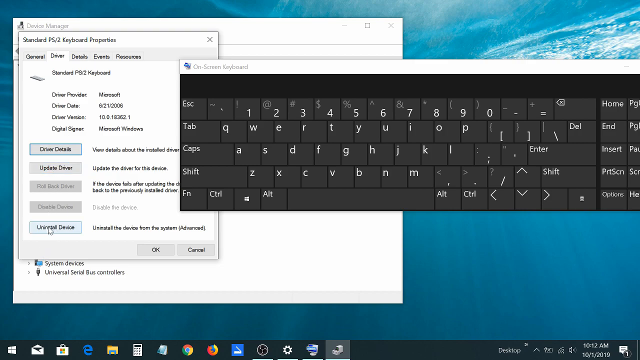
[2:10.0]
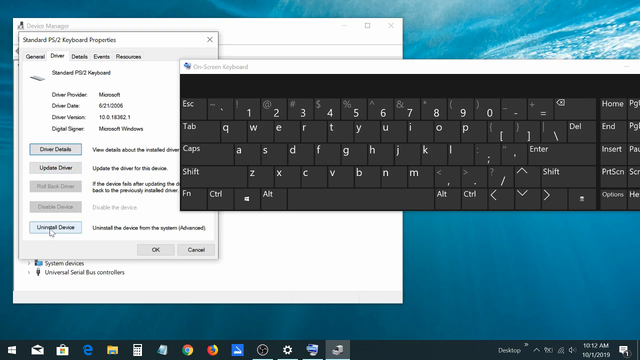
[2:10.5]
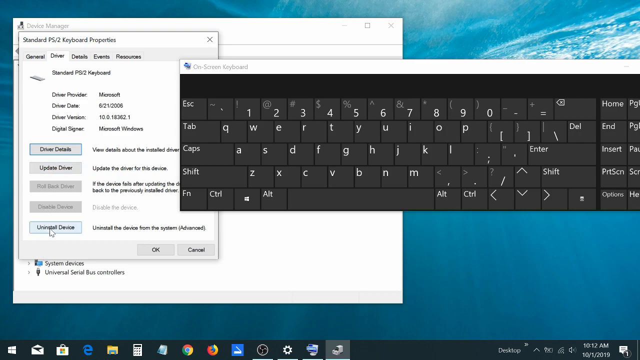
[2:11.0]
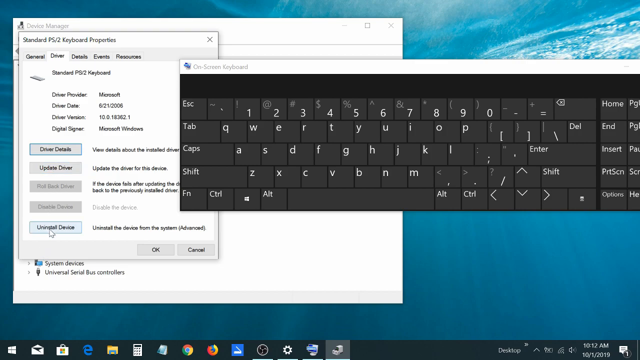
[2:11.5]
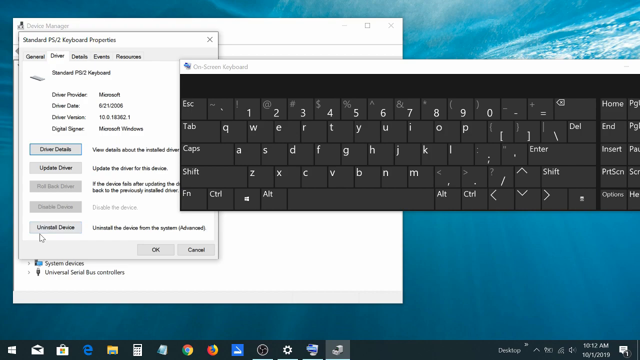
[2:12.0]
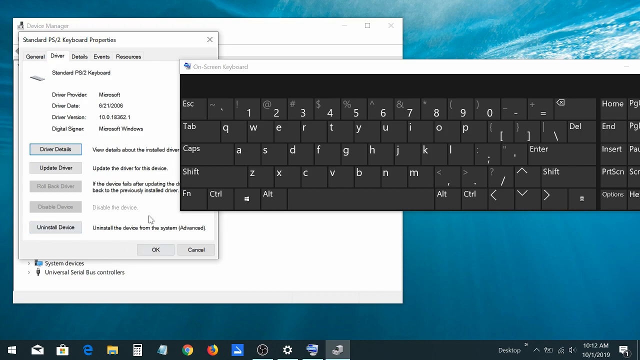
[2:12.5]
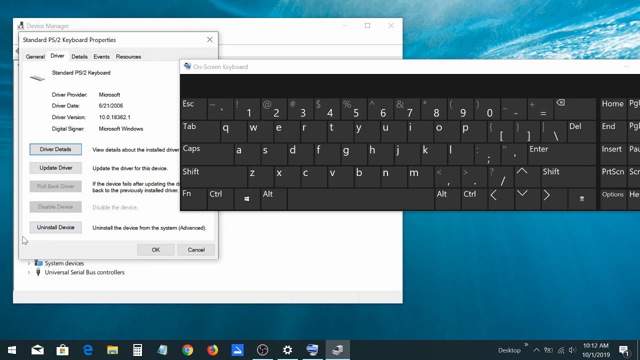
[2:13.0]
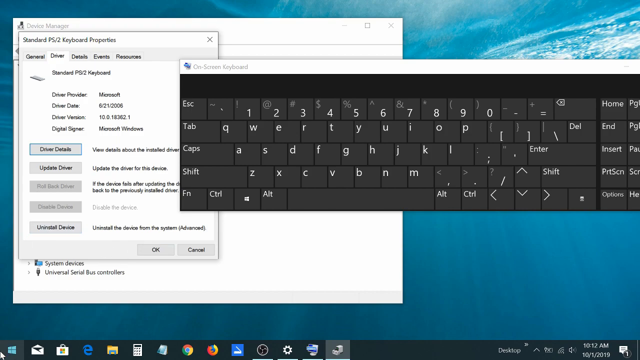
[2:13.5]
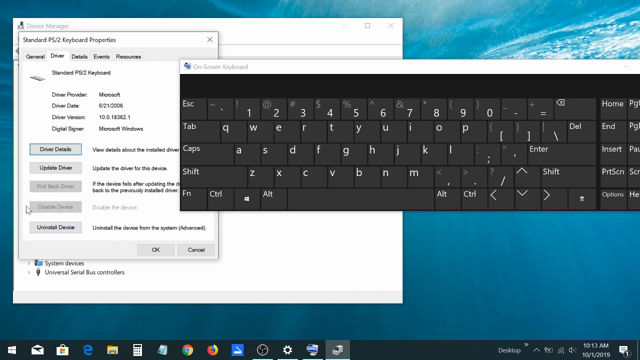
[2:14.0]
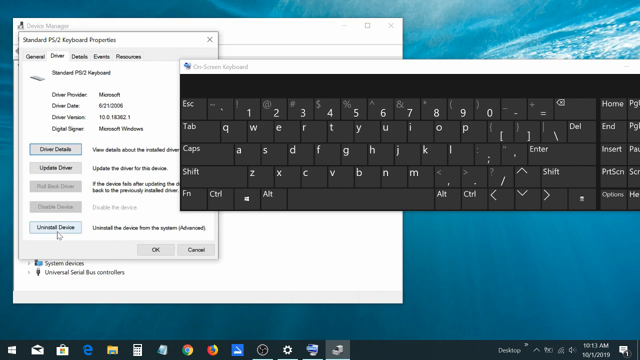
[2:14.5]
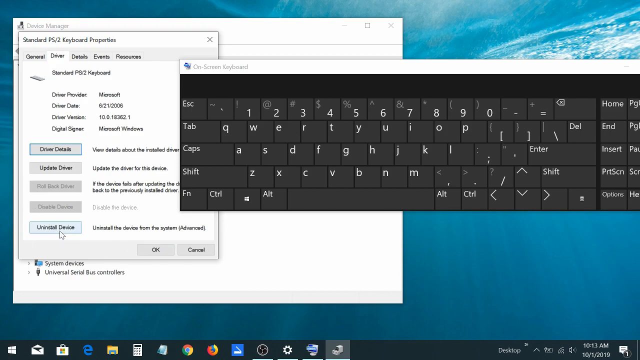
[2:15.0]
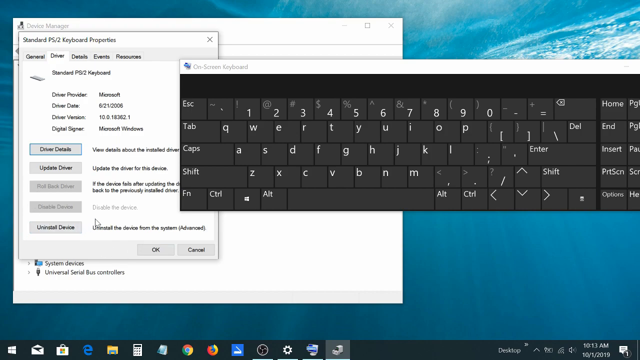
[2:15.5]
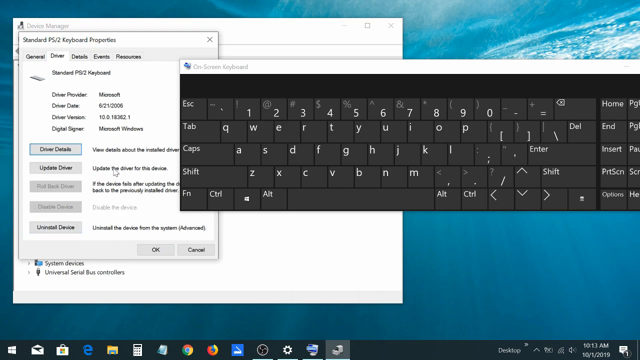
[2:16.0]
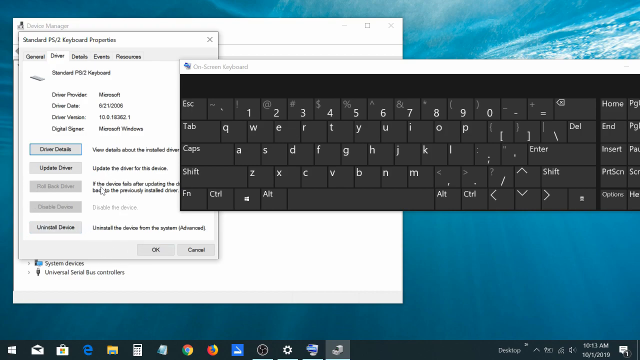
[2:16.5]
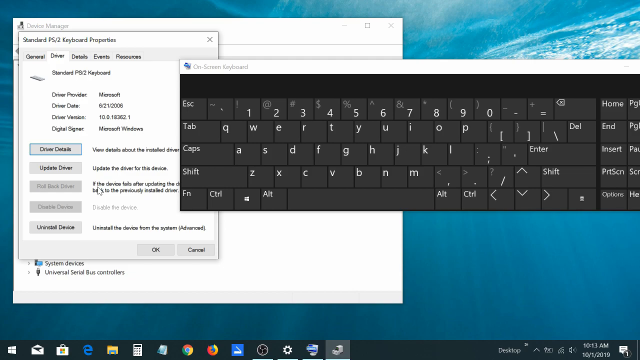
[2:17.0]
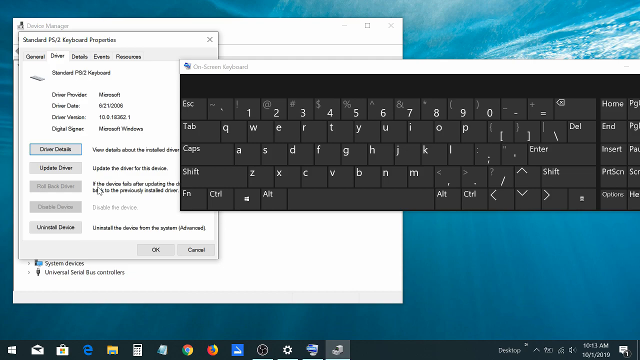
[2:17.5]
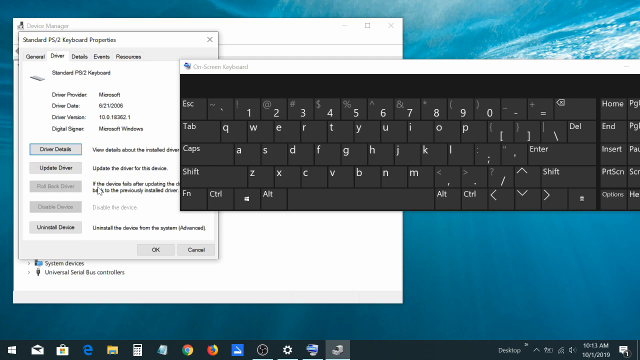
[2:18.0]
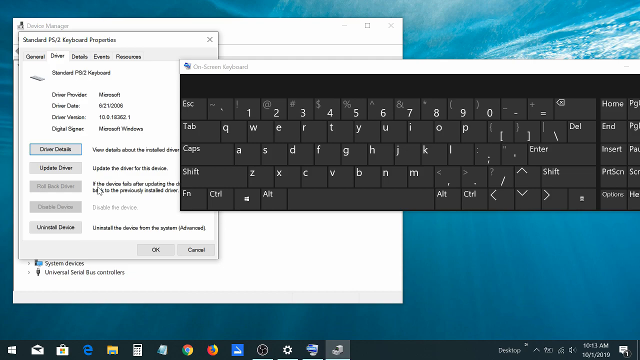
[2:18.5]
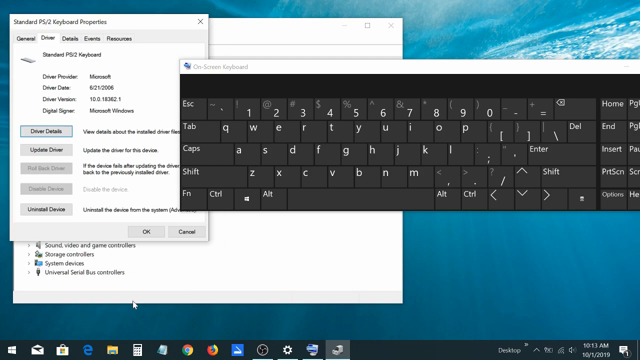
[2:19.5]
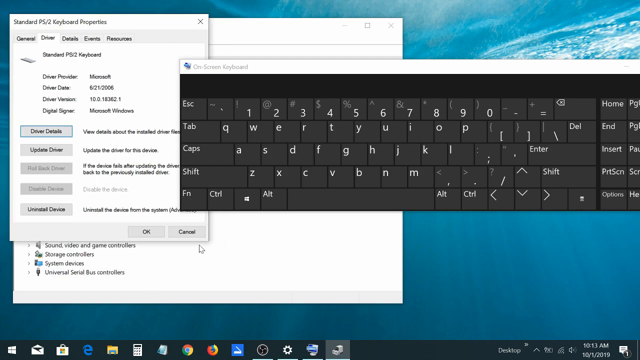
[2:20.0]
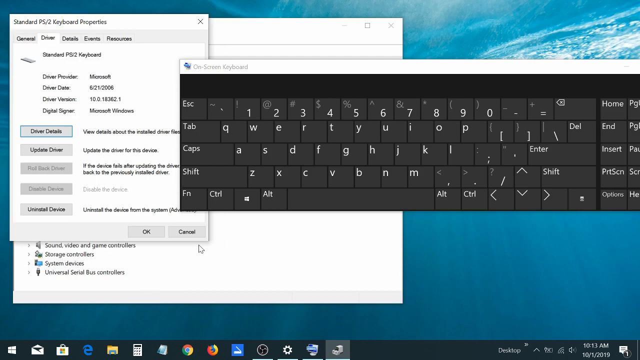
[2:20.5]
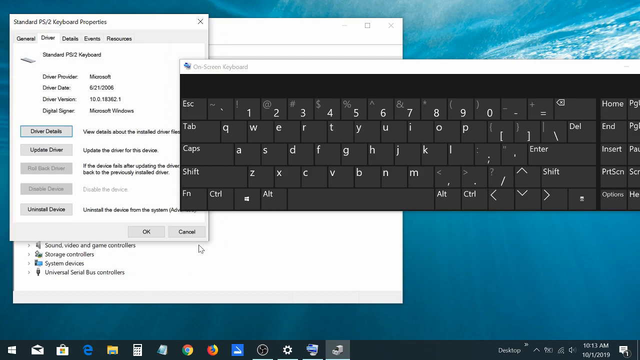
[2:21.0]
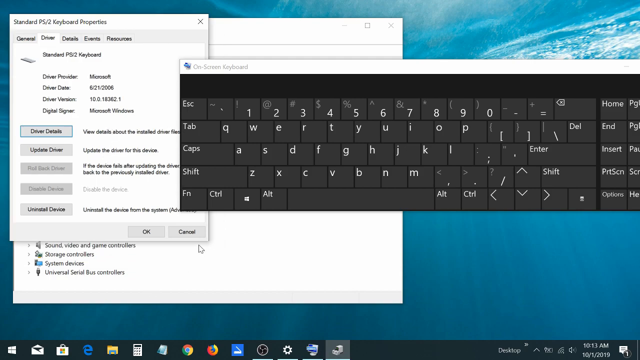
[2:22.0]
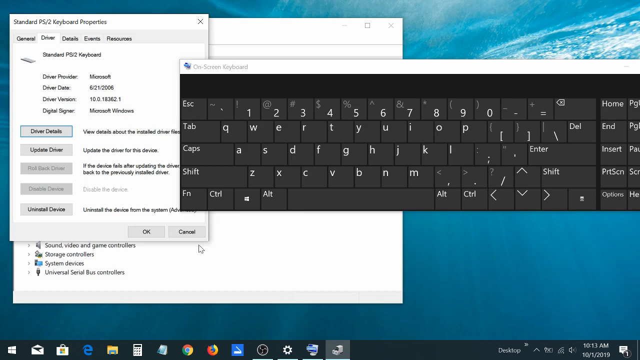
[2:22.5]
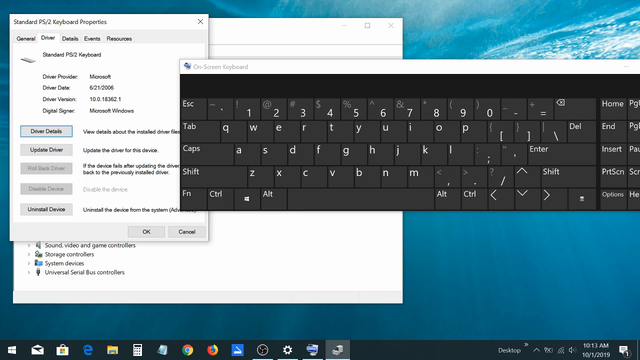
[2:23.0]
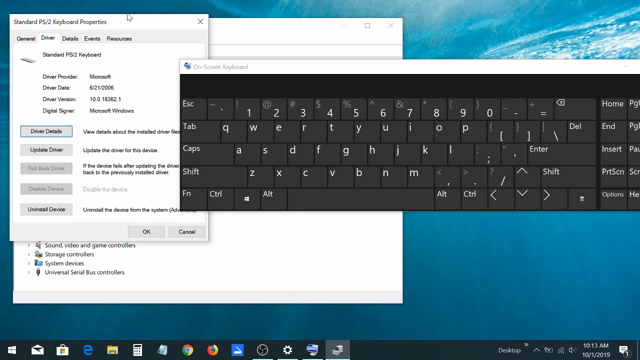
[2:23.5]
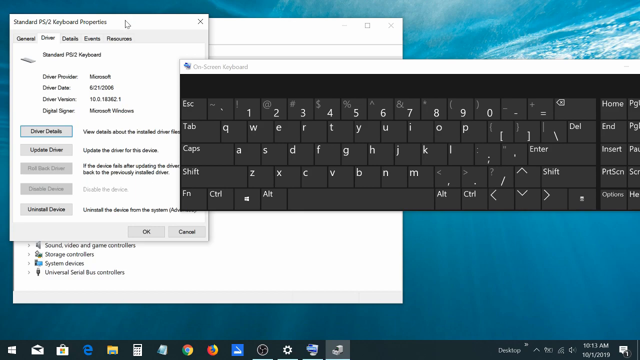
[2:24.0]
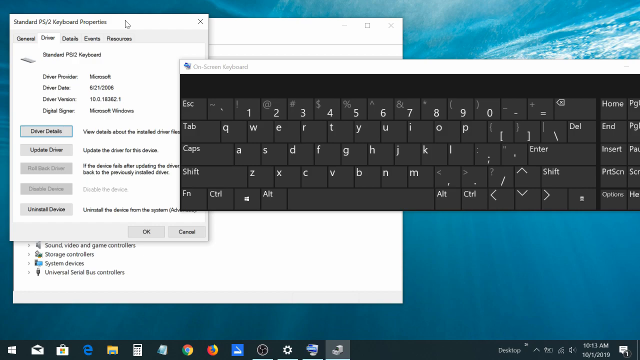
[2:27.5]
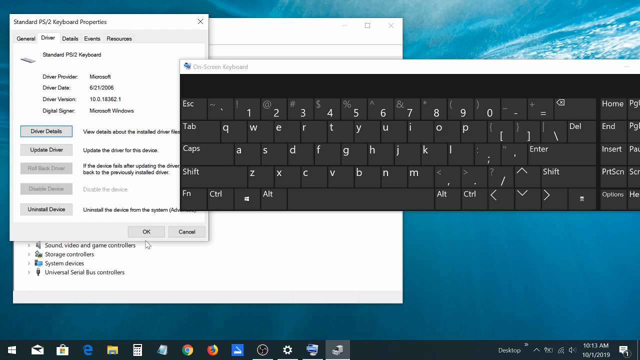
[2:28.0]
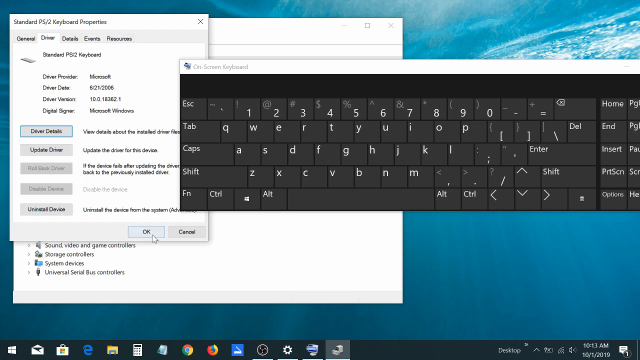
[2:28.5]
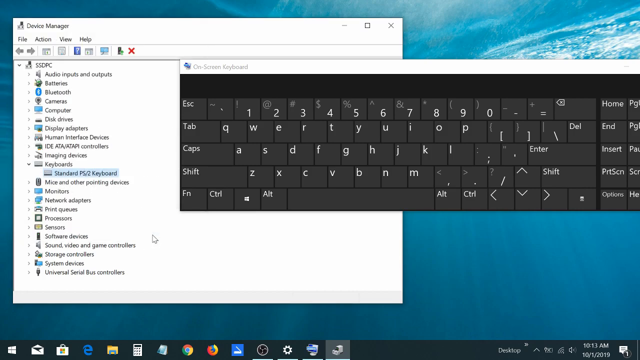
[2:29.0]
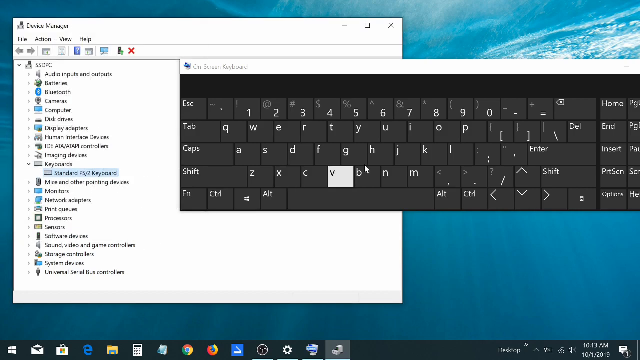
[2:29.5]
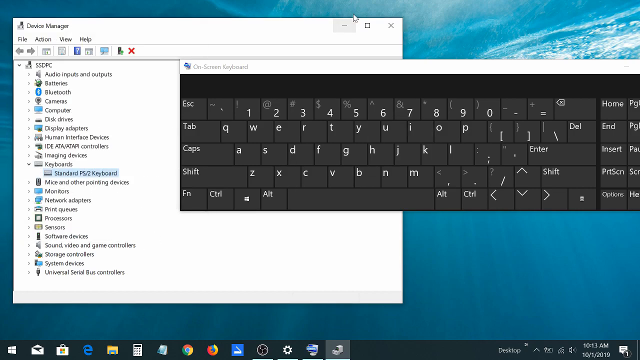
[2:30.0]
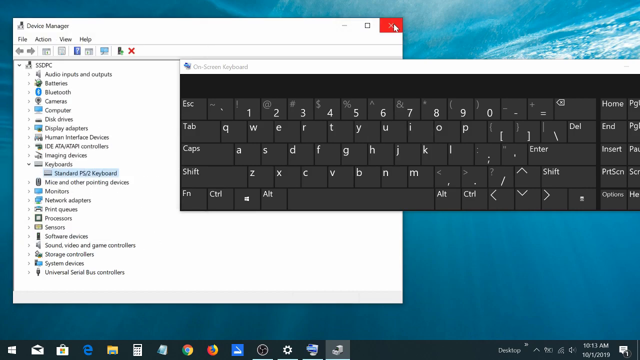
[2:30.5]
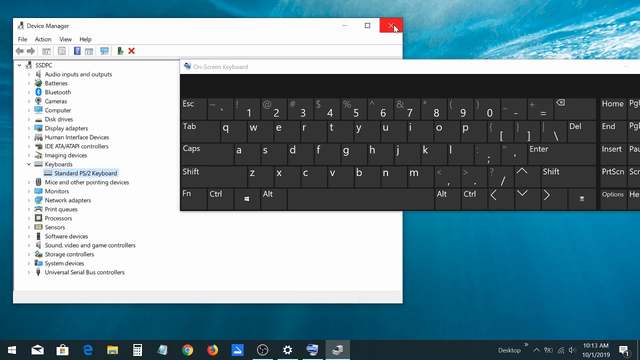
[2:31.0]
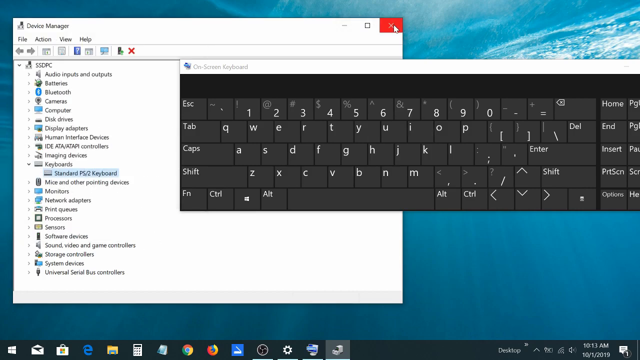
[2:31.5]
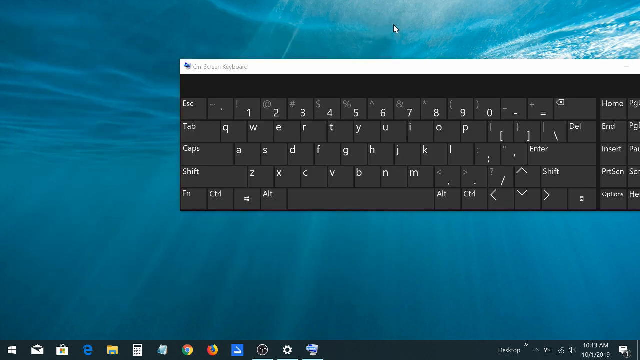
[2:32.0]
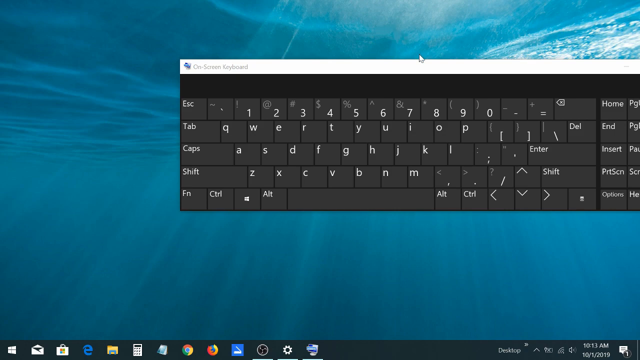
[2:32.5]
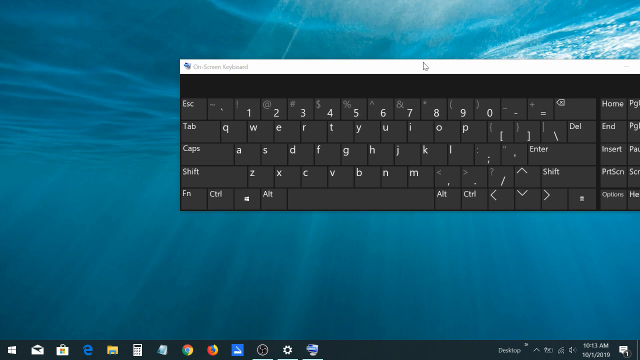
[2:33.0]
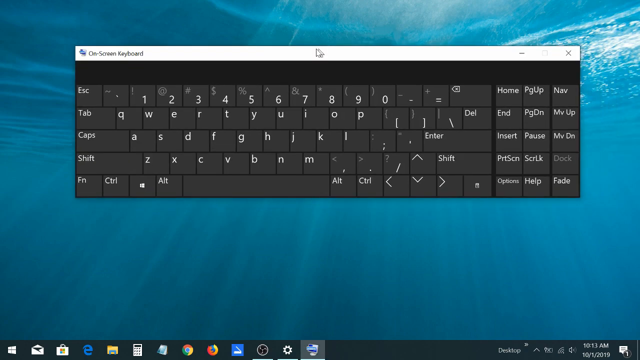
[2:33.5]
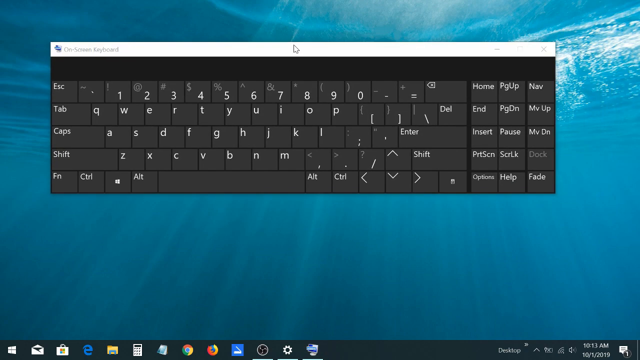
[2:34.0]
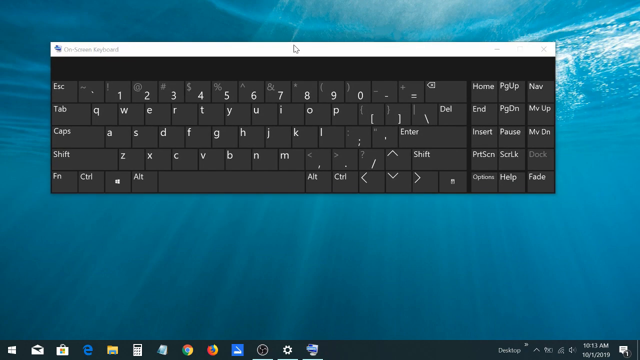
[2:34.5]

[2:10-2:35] The on-screen keyboard is still in the forefront and, together with Device Manager, blocks the wallpaper of the scuba diver in the very blue ocean. The mouse is over uninstall device; the person circles around it for a while, moves a little further up and around, and then moves the mouse around the screen. They click OK, close Device Manager with the X, and move the keyboard over.